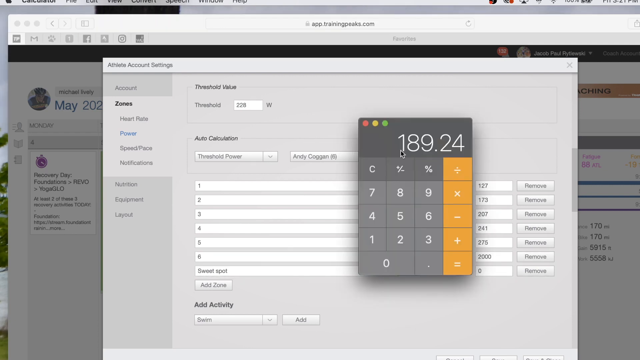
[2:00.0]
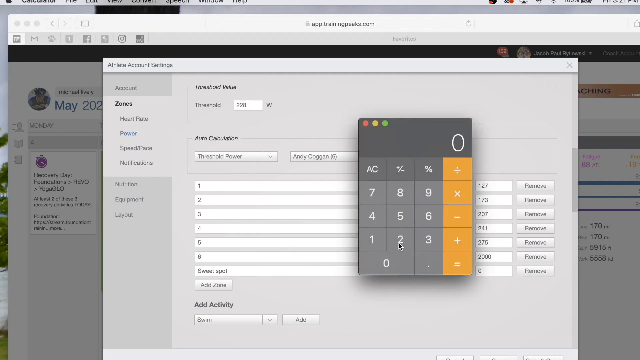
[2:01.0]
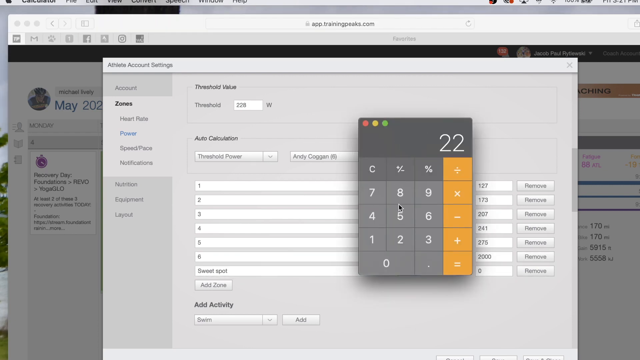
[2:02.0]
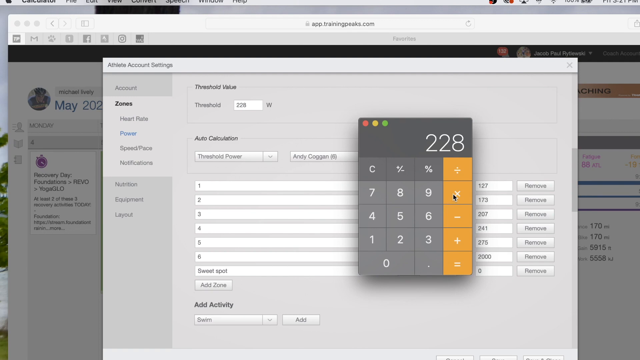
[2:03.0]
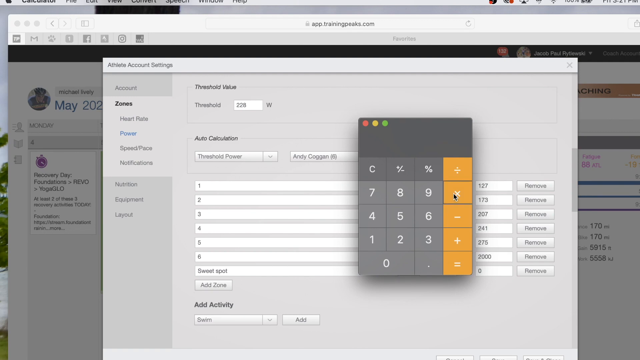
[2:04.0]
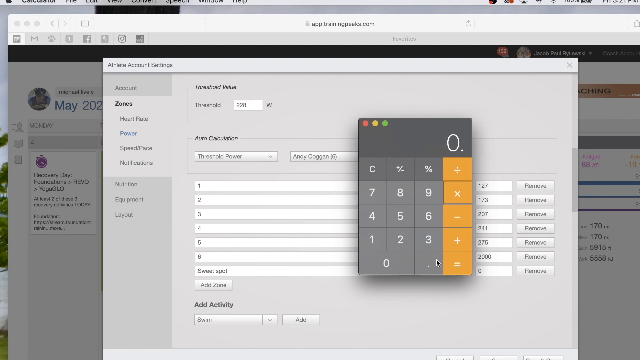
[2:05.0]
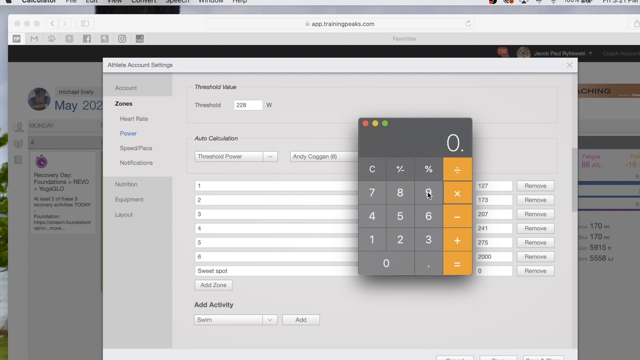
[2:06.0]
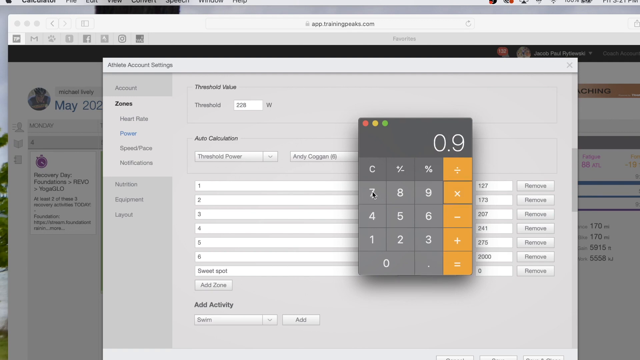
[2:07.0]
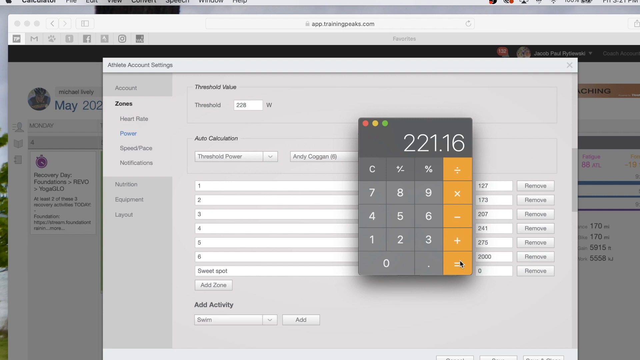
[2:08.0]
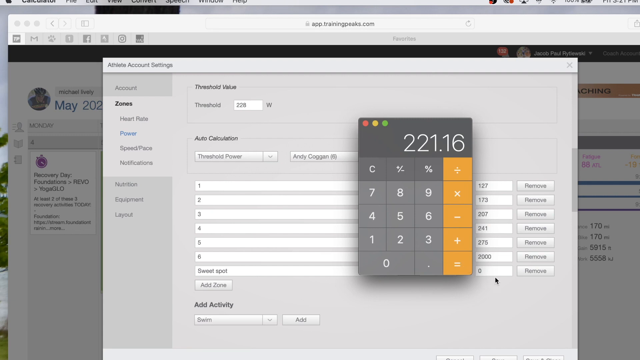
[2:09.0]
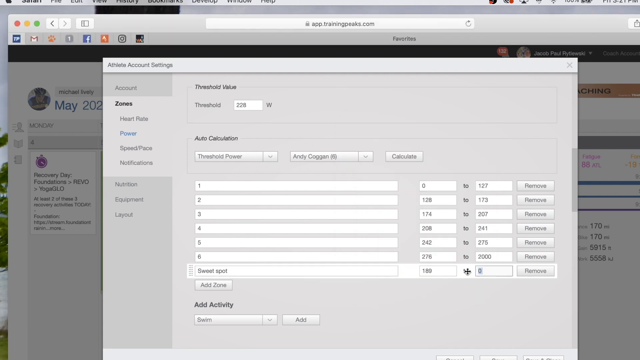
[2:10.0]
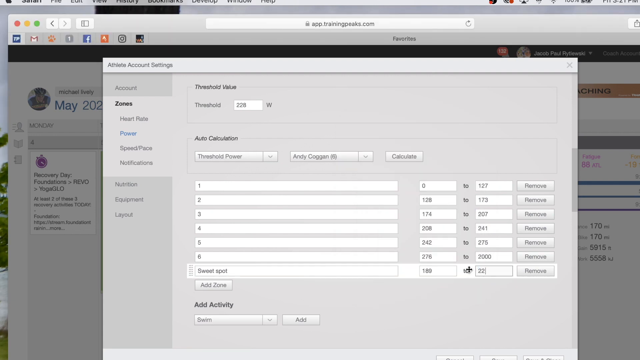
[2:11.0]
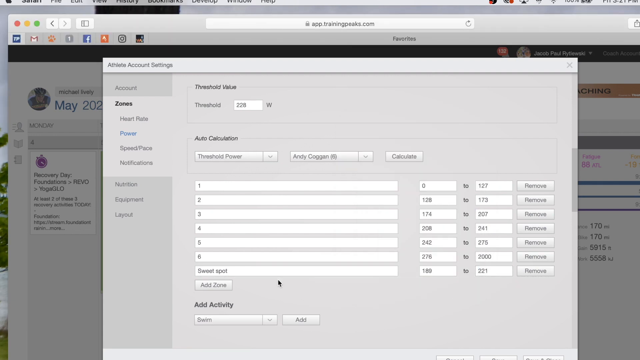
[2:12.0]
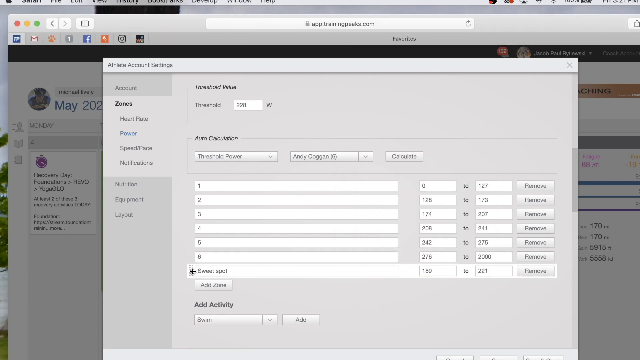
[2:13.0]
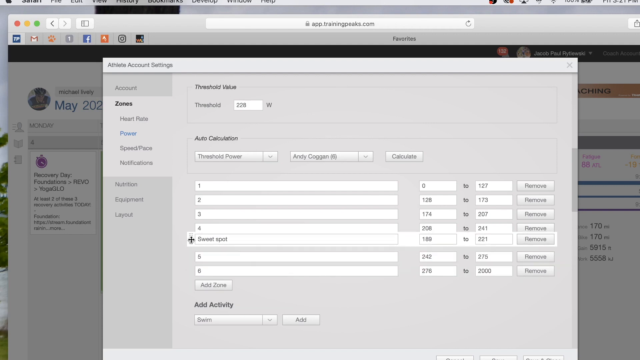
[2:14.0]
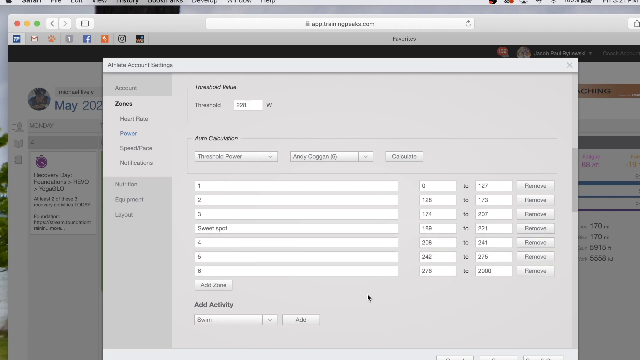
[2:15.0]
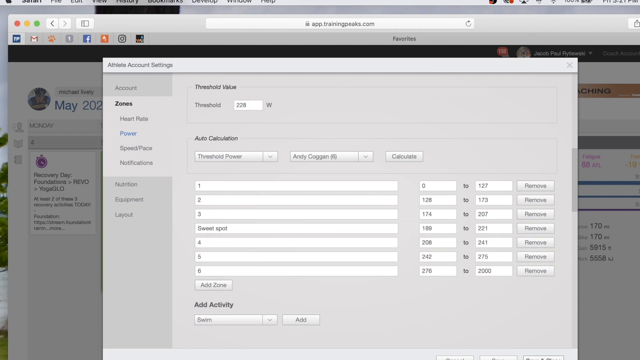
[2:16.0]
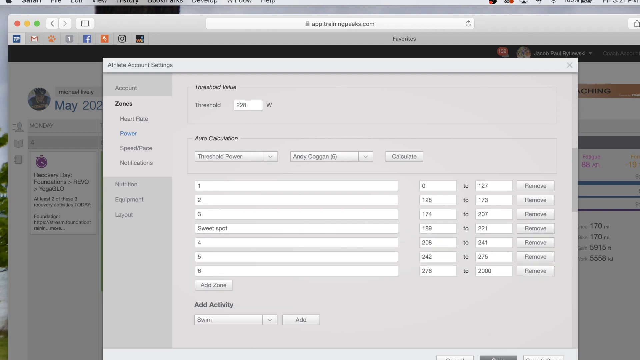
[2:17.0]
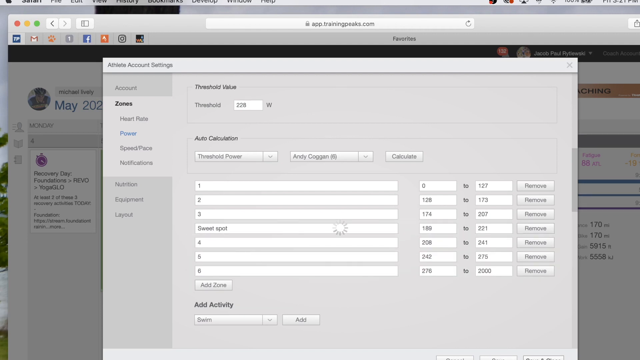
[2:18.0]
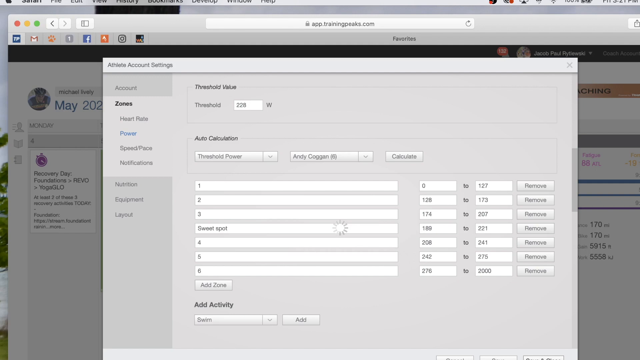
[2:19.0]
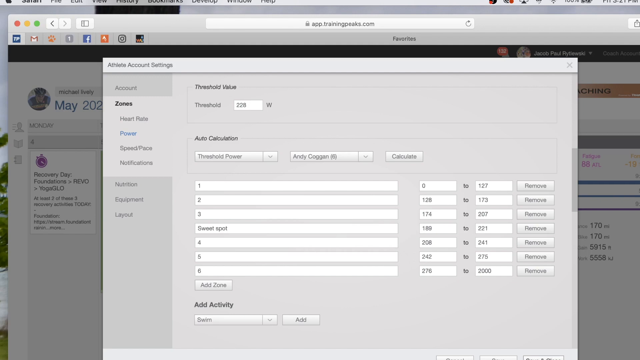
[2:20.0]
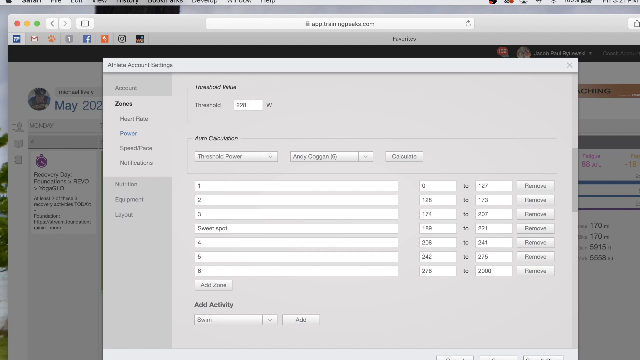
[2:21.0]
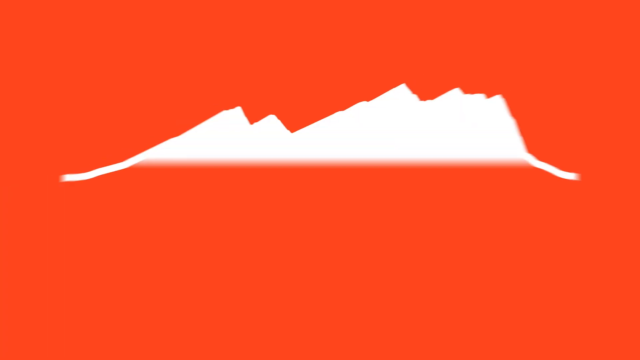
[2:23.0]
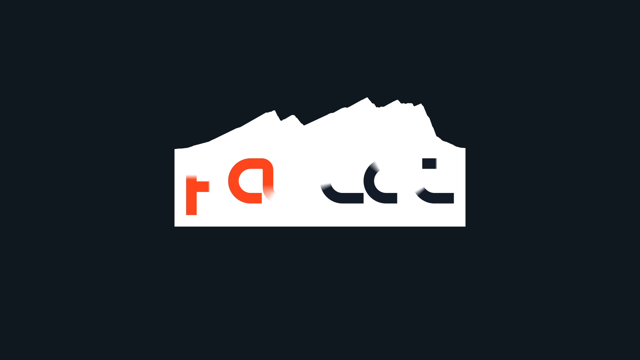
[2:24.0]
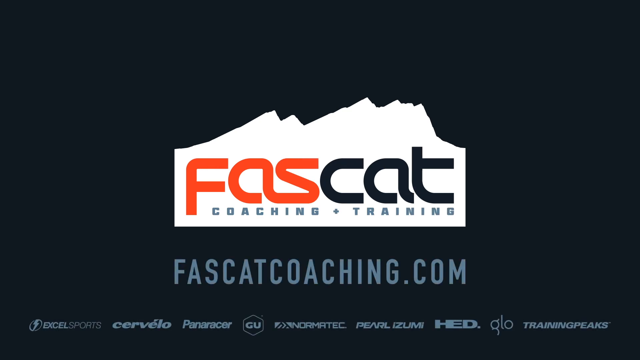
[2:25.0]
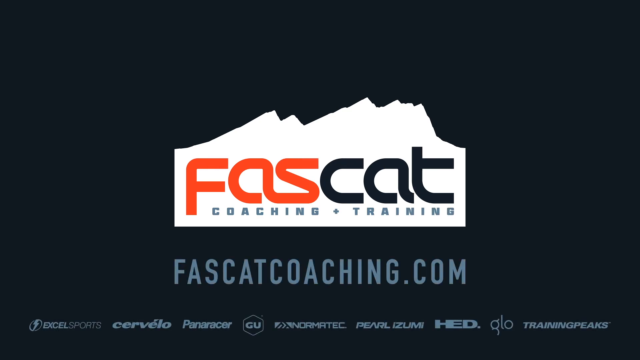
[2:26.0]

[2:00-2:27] The calculator pops back up, showing 189.24. He clears it, puts in 228 and multiplies it by 0.97, which equals 221.16. He then goes to the box beside the one where he entered 189; between them is something that looks like "2", though it is unclear because it is so blurry. He puts in 221. To the right of this is a gray tab that says "Remove". He goes back over and moves the sweet spot zone up; the zones are numbered one through six, and he moves it between three and four. Add zone is shown again, with something loading in the center. The video then returns to the red background with the mountain peak and "FASCAT coaching and training" in it, plus "FAScatcoaching.com" and logos for different companies across the bottom.